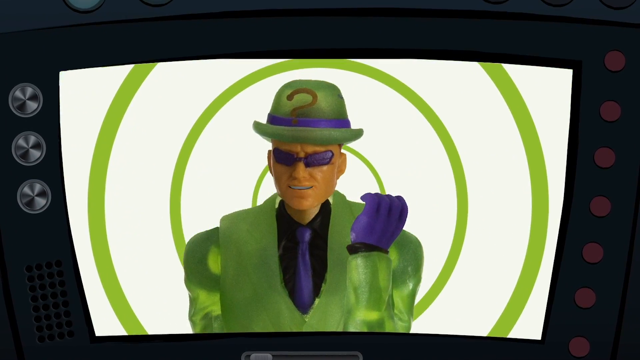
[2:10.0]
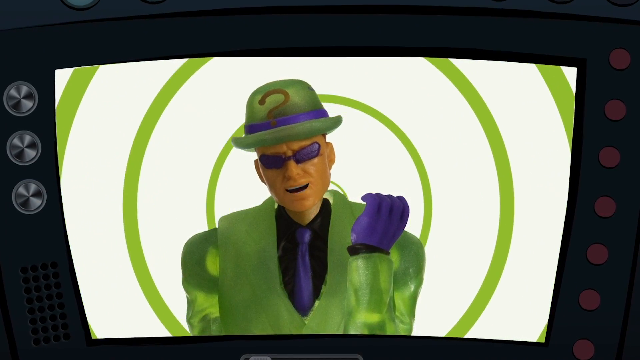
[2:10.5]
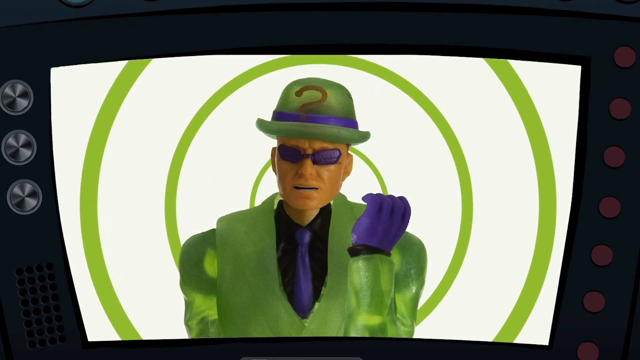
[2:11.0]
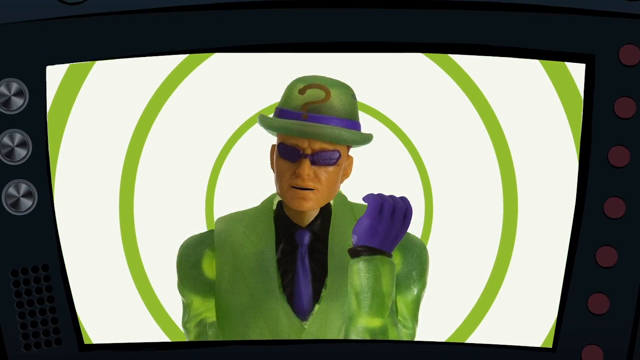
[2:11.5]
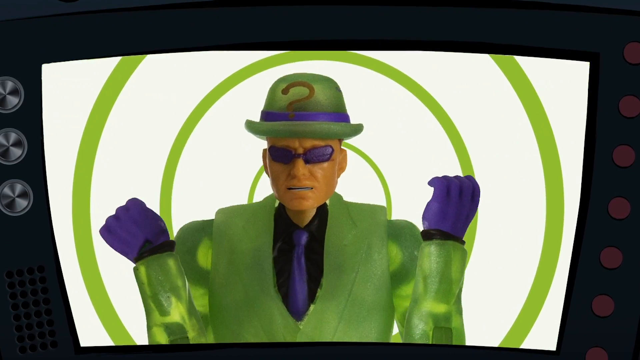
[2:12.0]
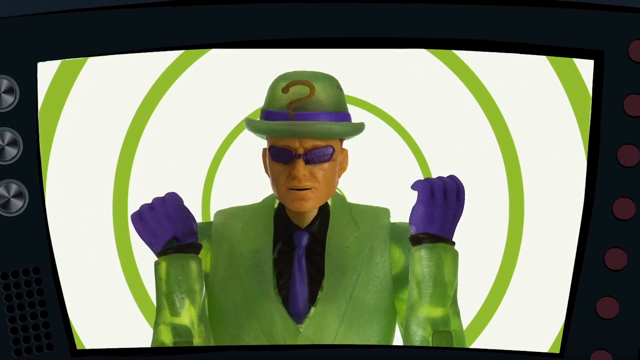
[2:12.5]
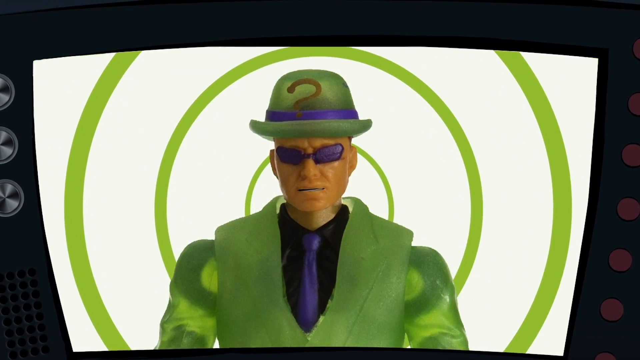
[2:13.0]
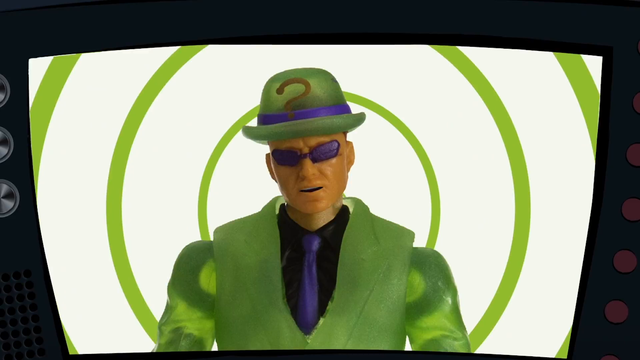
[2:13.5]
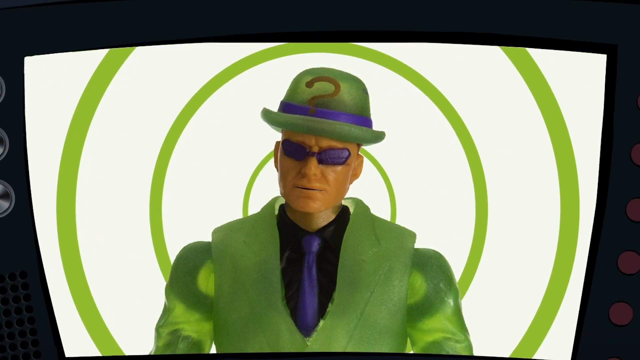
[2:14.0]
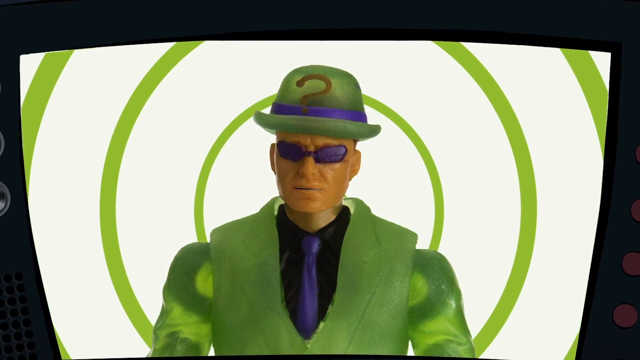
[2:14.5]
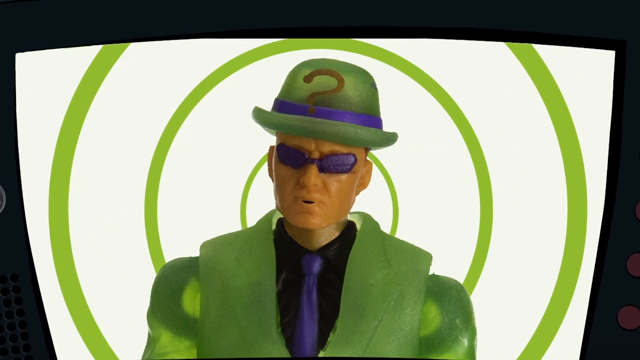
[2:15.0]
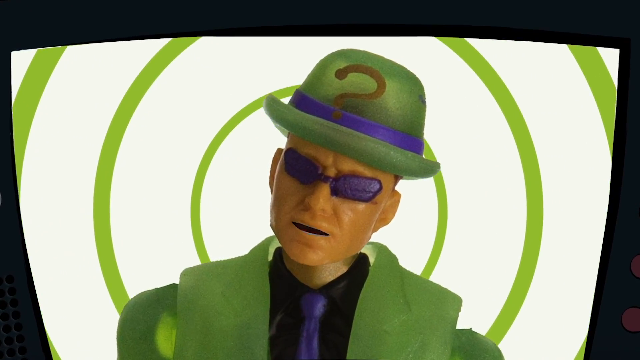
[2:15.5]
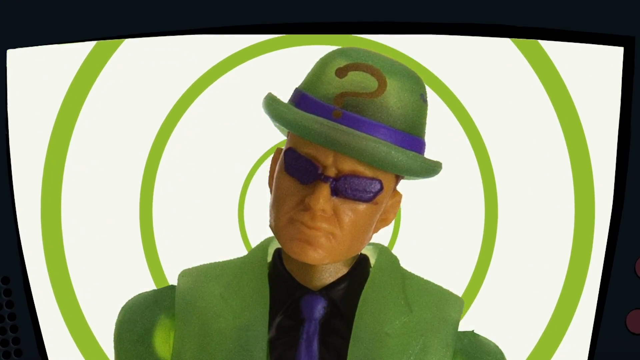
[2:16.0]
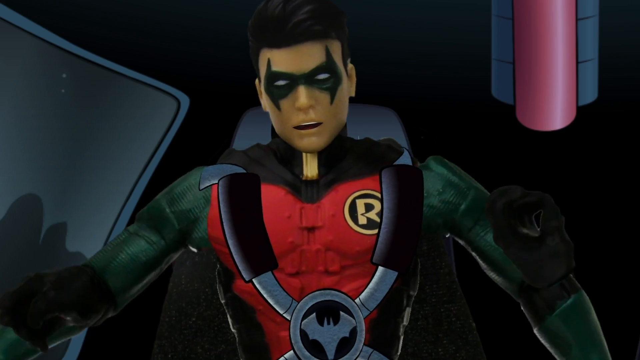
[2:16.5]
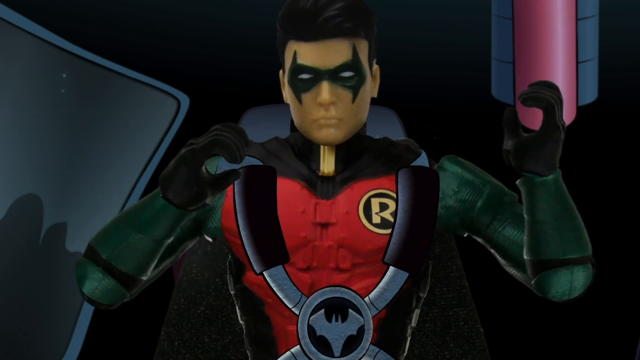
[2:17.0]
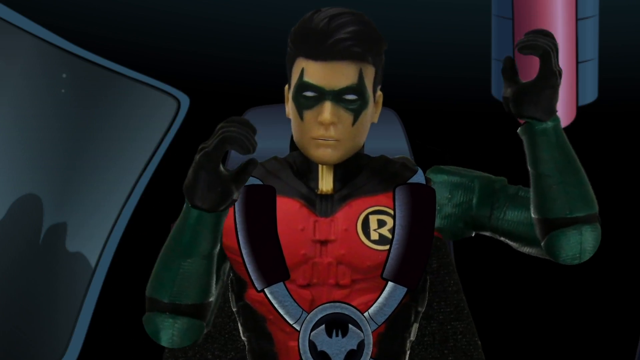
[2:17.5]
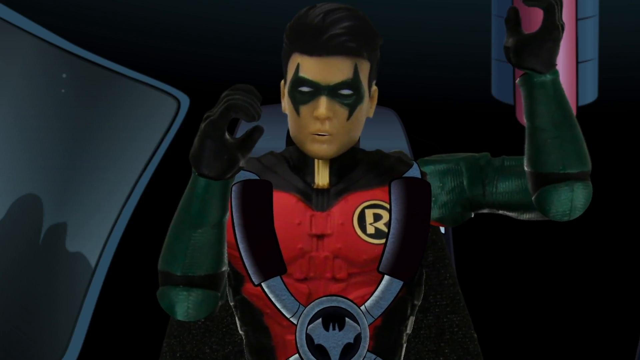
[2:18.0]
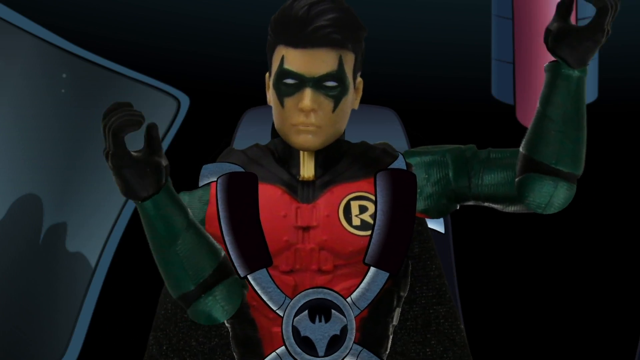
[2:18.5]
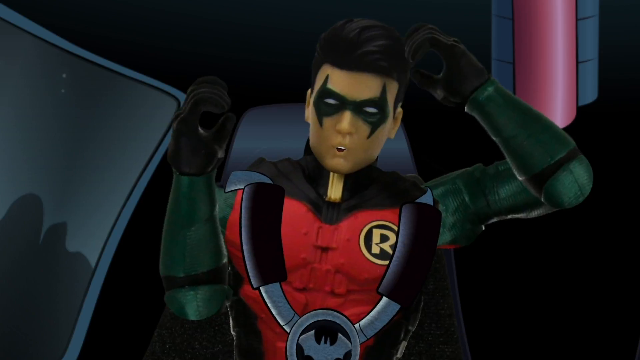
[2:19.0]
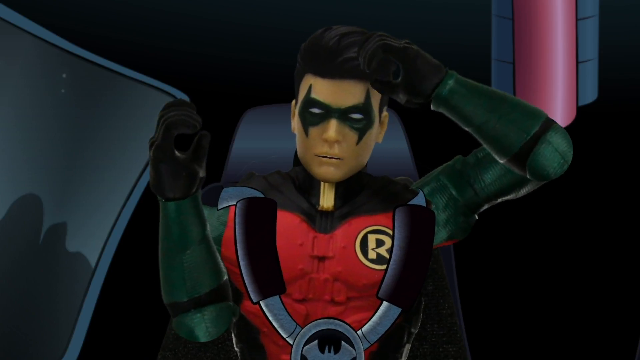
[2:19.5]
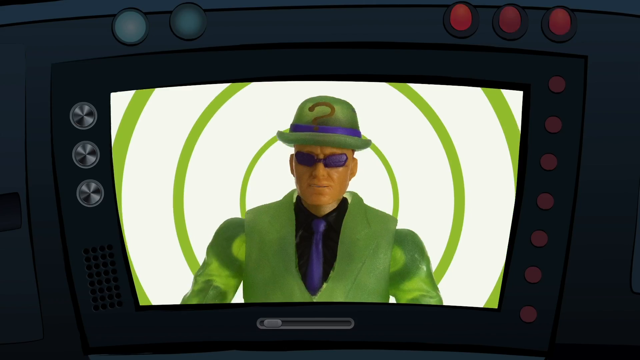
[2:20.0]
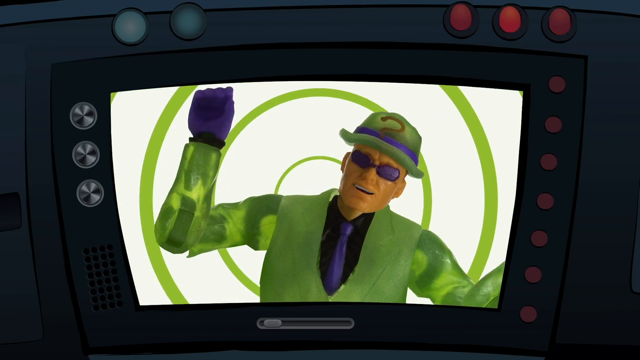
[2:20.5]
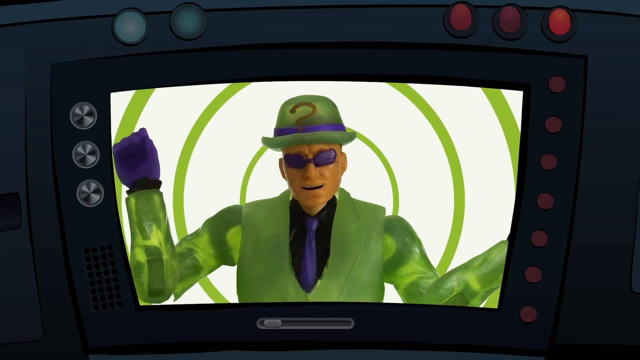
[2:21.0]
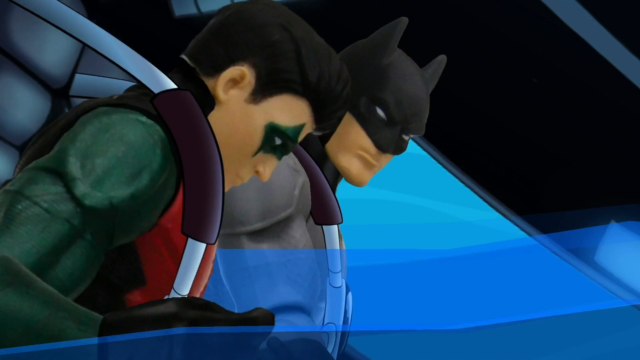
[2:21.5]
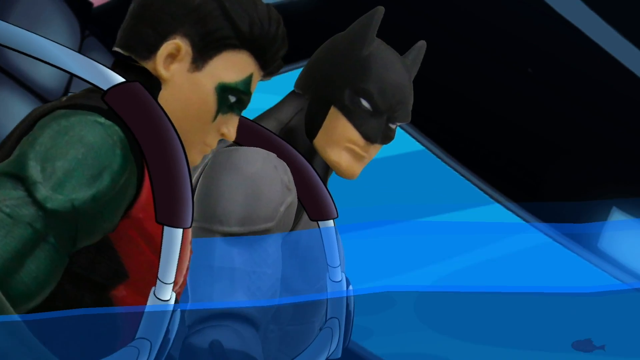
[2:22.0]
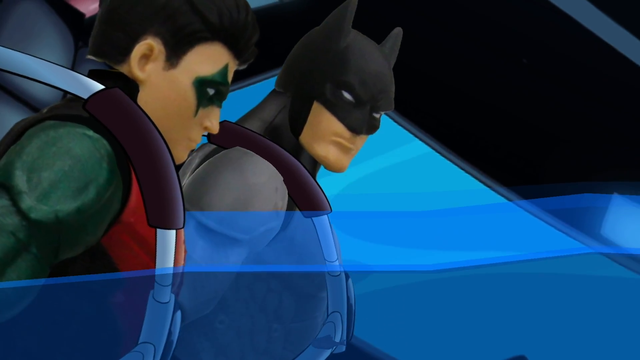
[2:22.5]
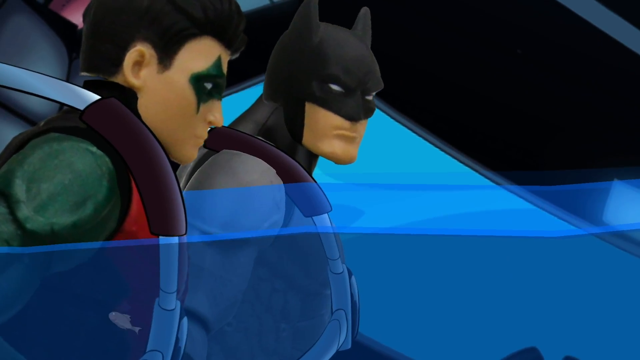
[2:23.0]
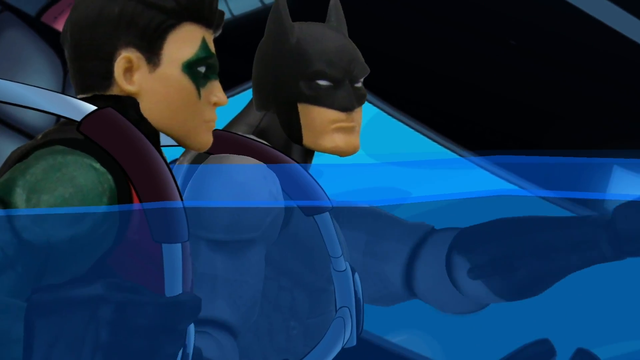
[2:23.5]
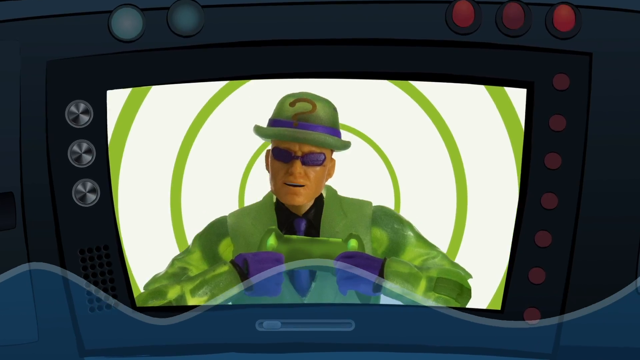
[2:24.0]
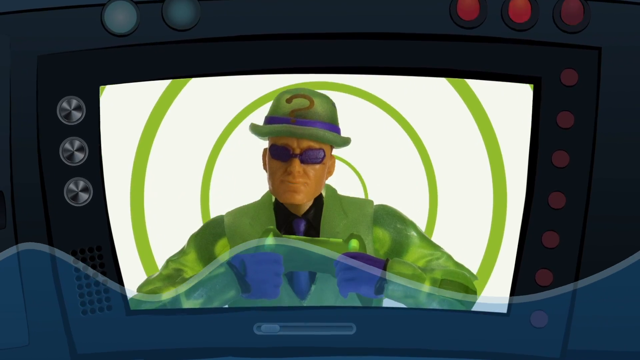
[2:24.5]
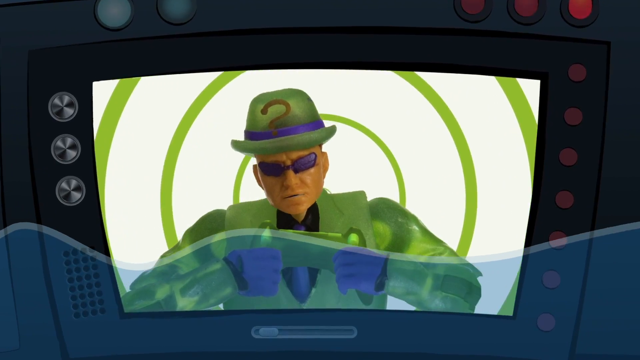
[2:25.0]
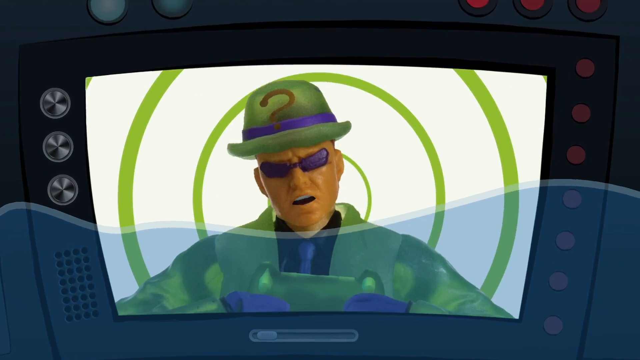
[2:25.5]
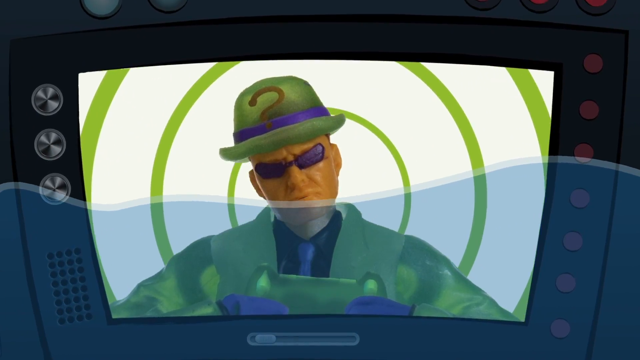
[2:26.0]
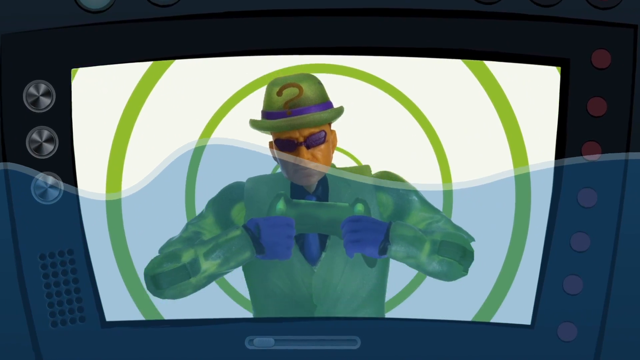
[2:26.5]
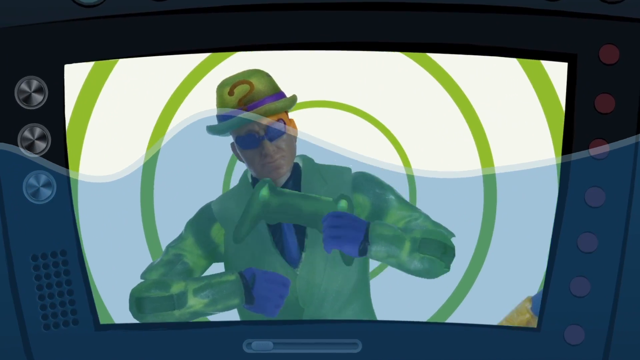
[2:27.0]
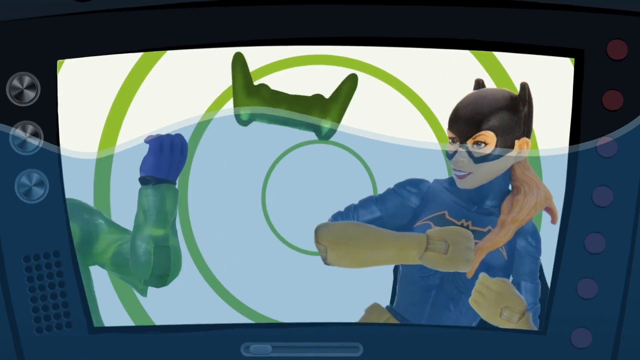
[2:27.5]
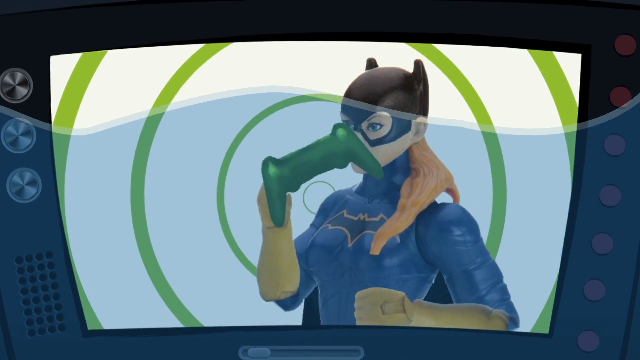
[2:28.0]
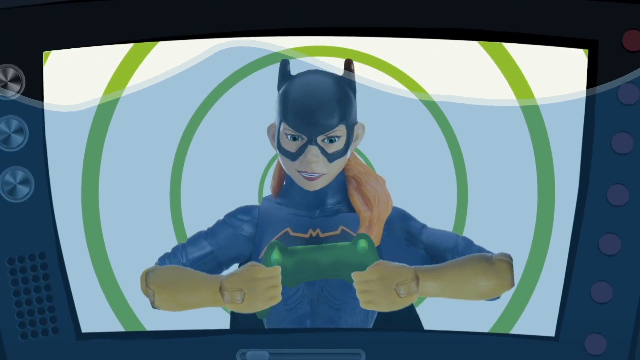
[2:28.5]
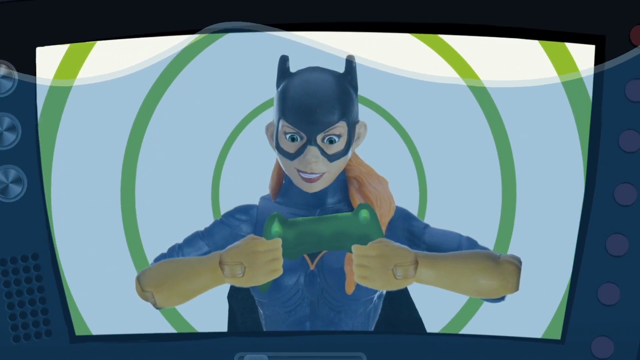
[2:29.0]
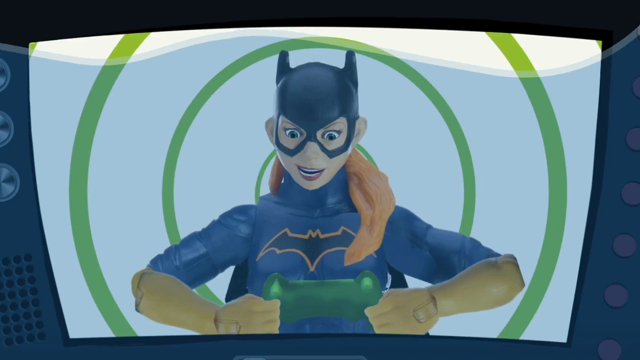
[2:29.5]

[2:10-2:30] The screen inside the Batmobile shows a red alert and a hypnotic green swirl background. A man on it wears a metallic green suit, purple gloves, purple tie, purple glasses, a black shirt, and a green hat with a purple stripe and a question mark on top. He looks like an action figure or claymation of some sort, and the background is drawn. He talks and moves his hands, and the view zooms into his face. Robin, in the seat of the Batmobile, looks kind of jumpy and concerned and moves his mouth as he talks. The view returns to the Riddler, who looks like he is celebrating. Batman and Robin are in the Batmobile as it appears to be submerged; Batman is quite calm given the situation. The Batmobile slowly fills with water. The Riddler is shown with the controller, possibly the one controlling the Batmobile, and Batgirl comes in to kick him and grabs the controller from the Riddler.